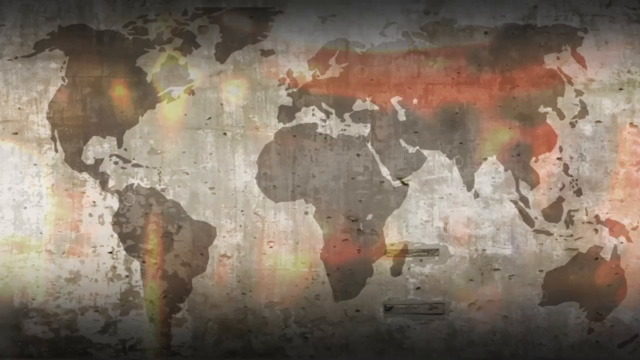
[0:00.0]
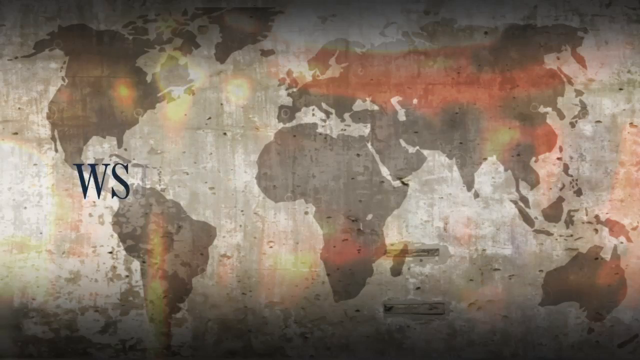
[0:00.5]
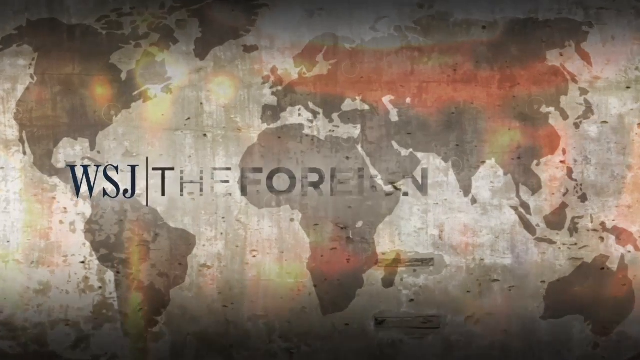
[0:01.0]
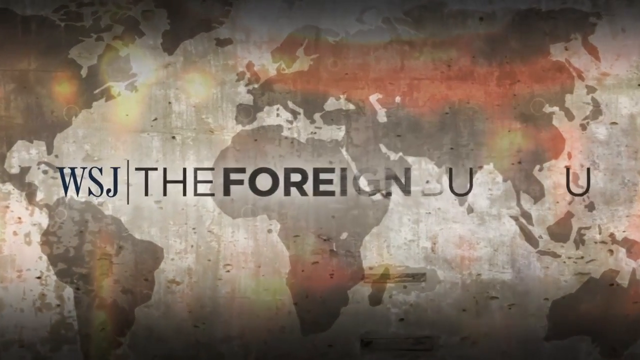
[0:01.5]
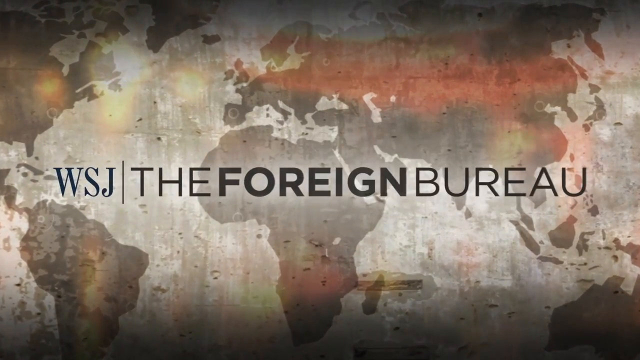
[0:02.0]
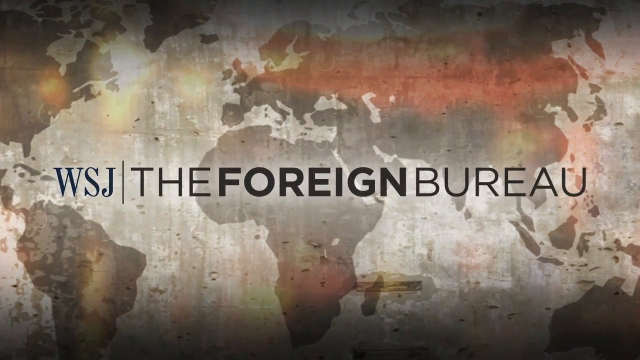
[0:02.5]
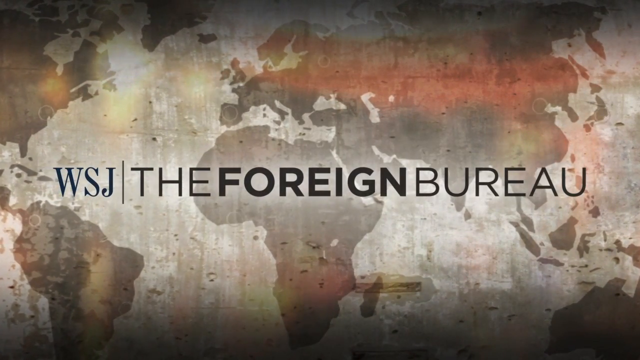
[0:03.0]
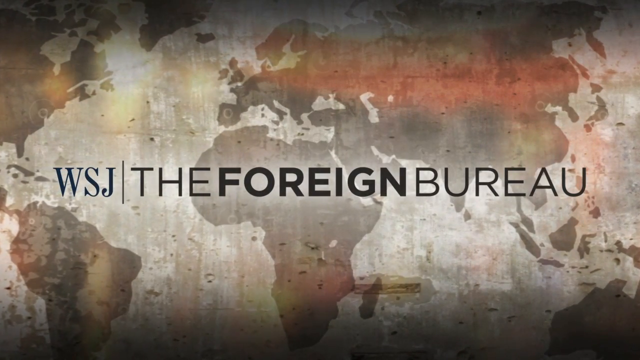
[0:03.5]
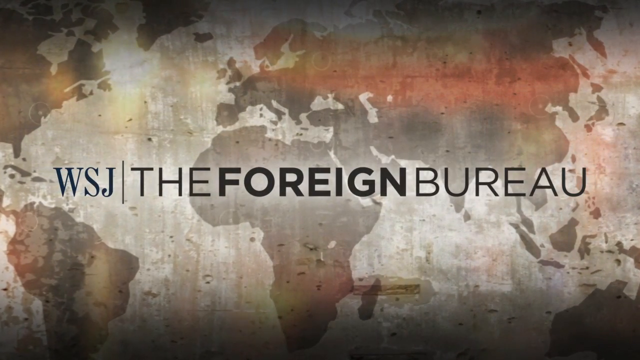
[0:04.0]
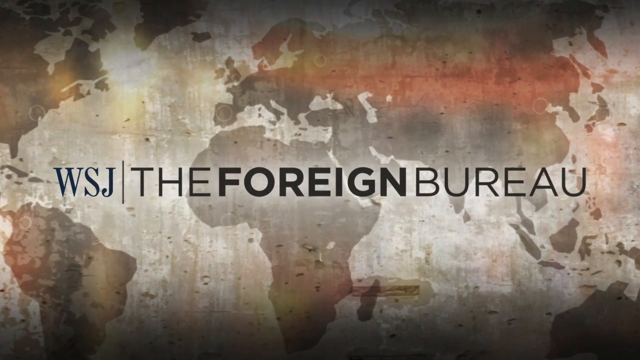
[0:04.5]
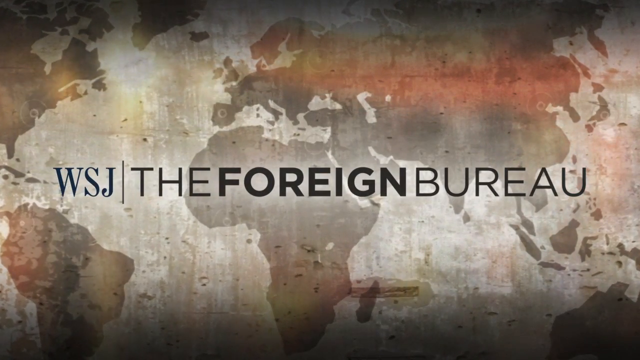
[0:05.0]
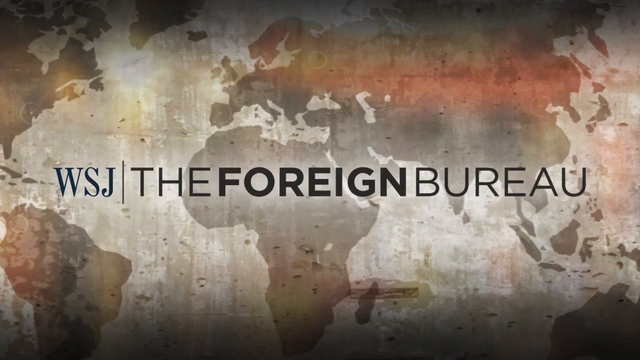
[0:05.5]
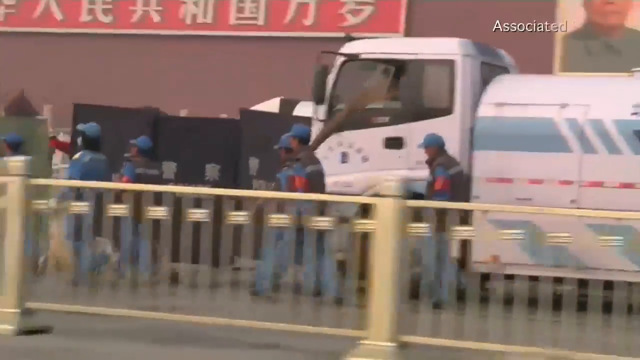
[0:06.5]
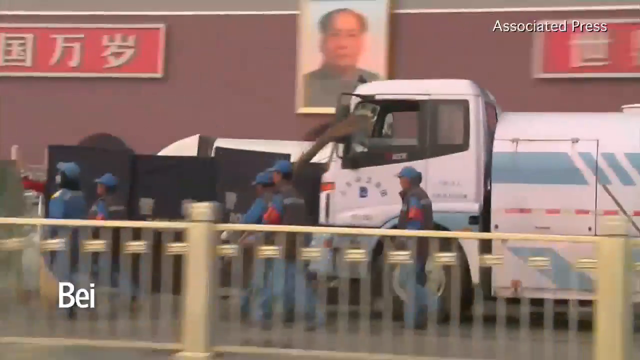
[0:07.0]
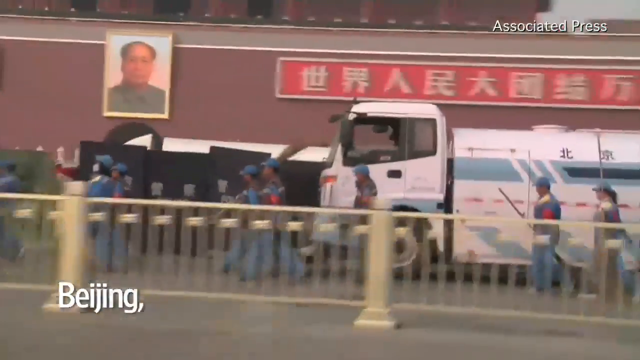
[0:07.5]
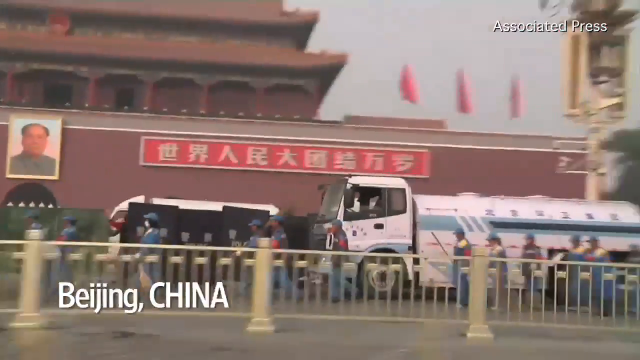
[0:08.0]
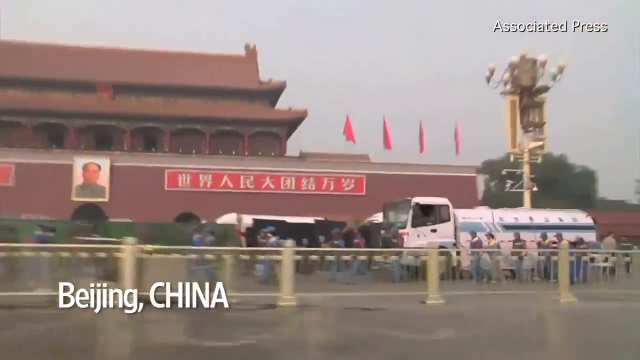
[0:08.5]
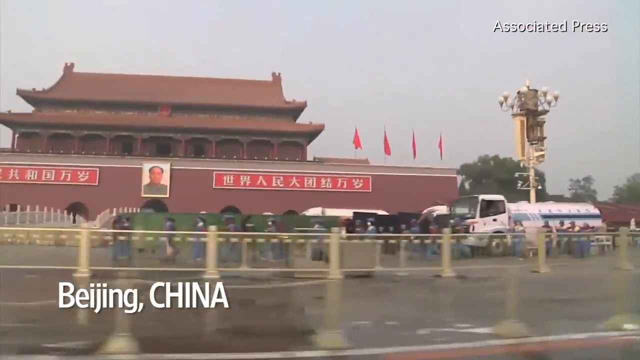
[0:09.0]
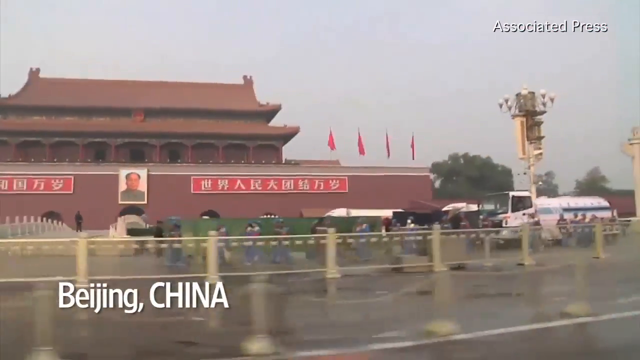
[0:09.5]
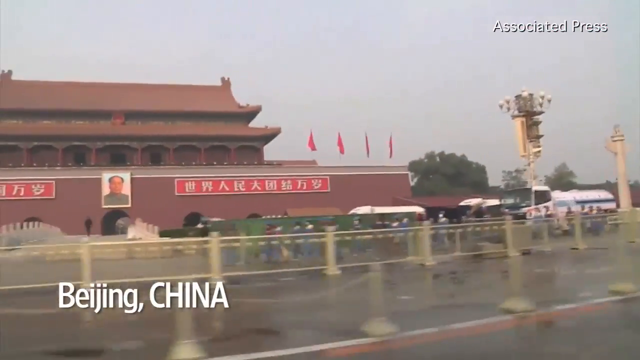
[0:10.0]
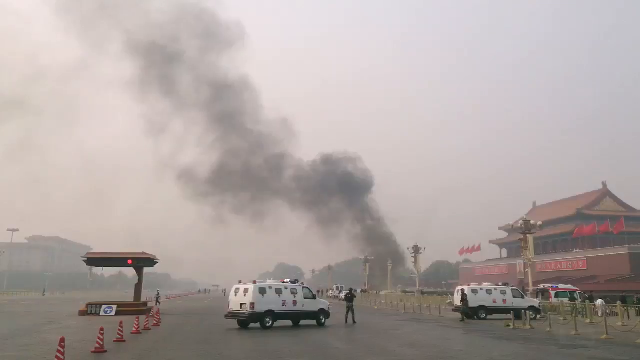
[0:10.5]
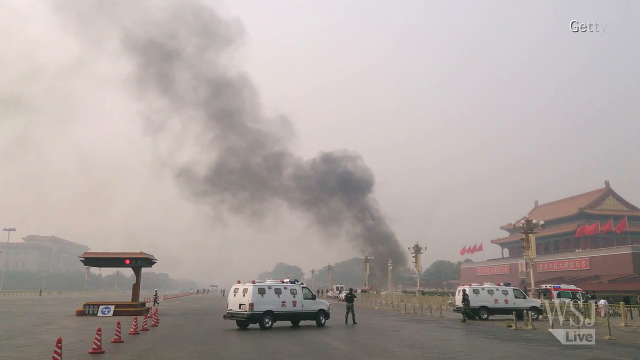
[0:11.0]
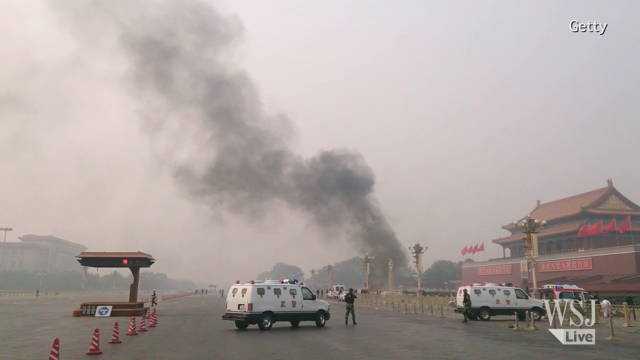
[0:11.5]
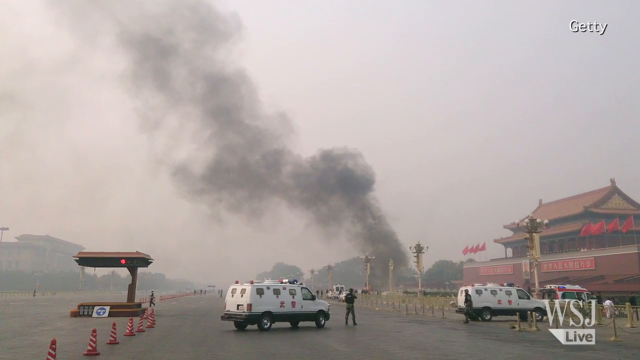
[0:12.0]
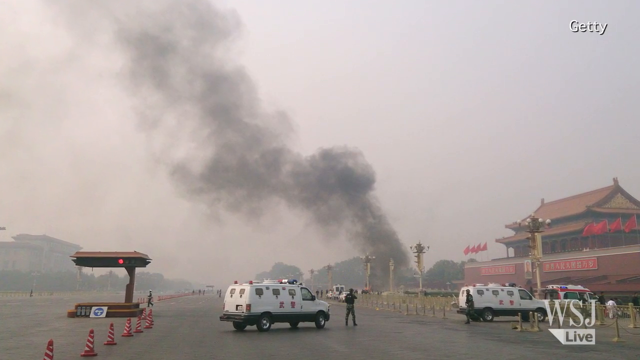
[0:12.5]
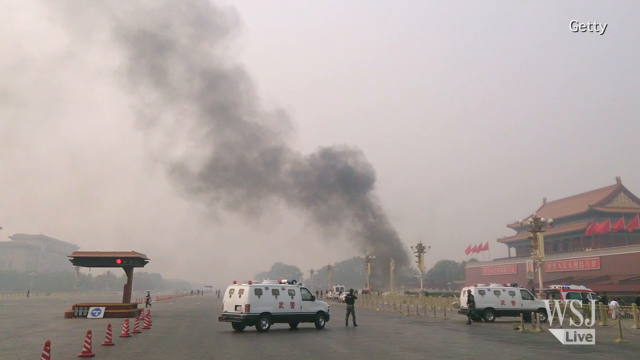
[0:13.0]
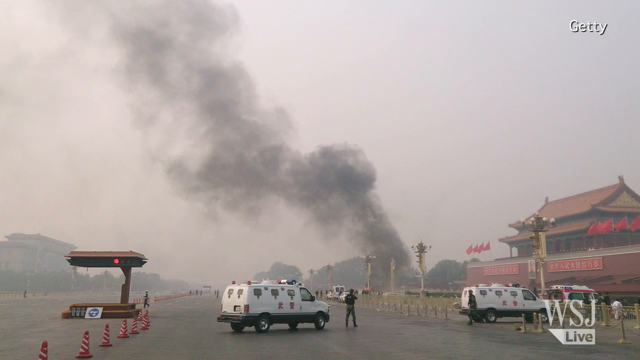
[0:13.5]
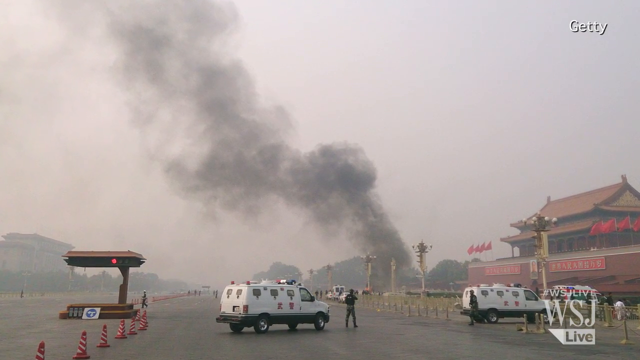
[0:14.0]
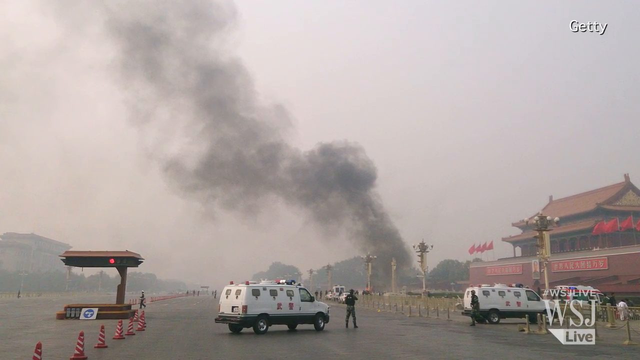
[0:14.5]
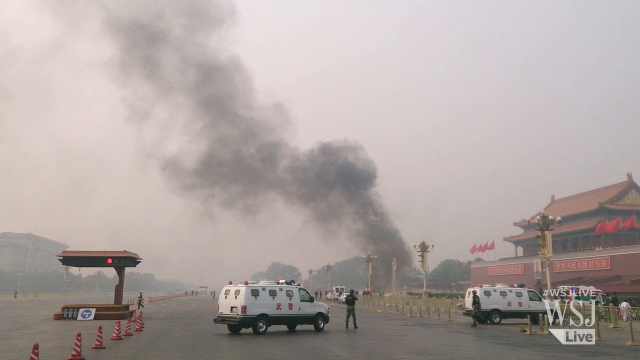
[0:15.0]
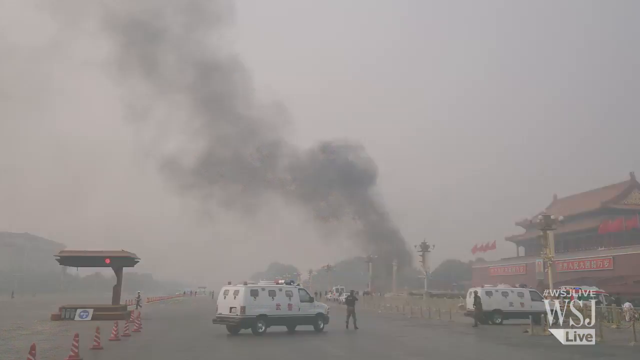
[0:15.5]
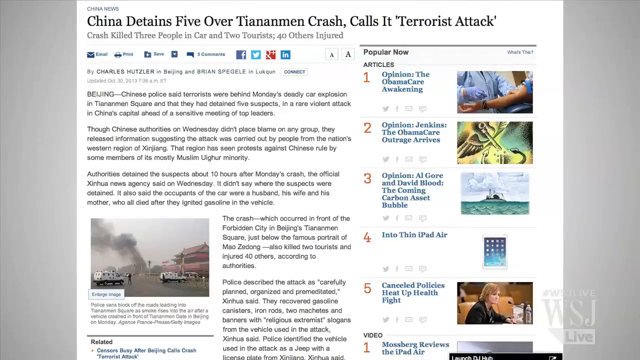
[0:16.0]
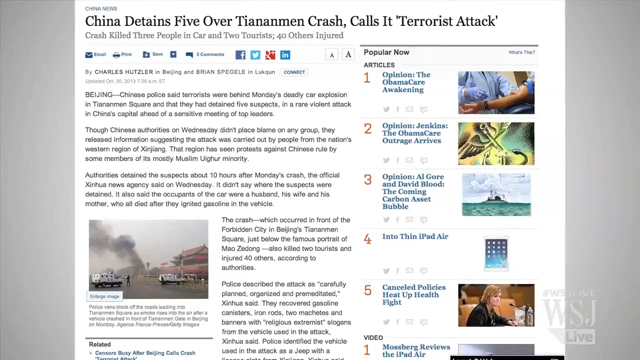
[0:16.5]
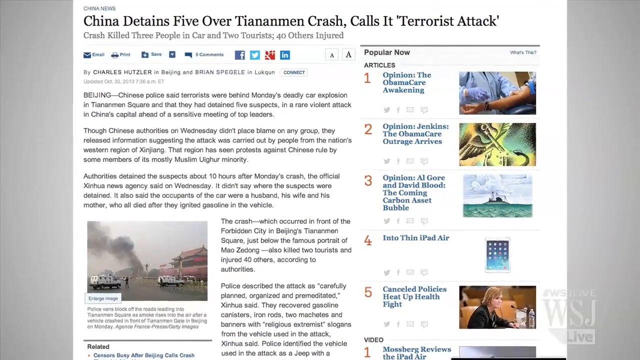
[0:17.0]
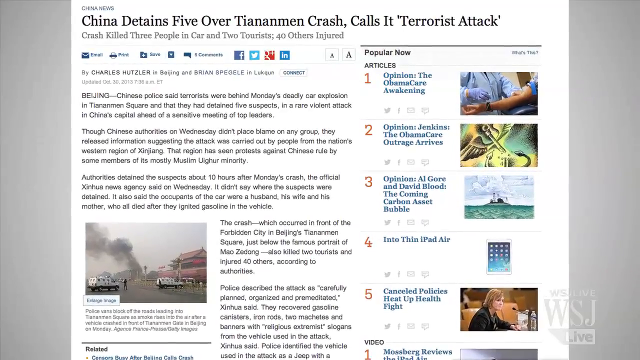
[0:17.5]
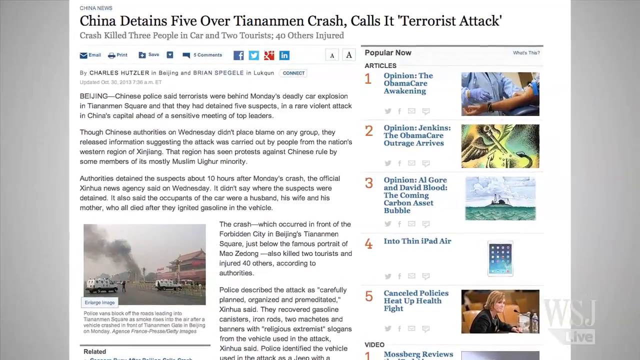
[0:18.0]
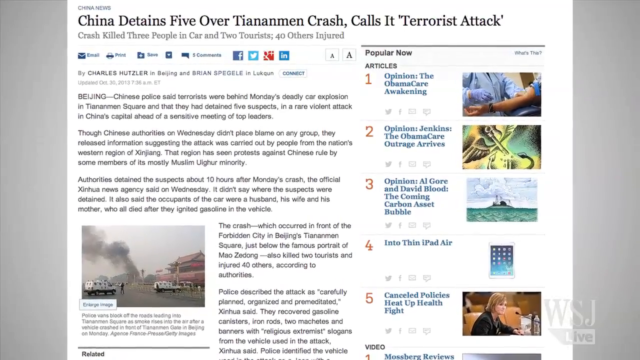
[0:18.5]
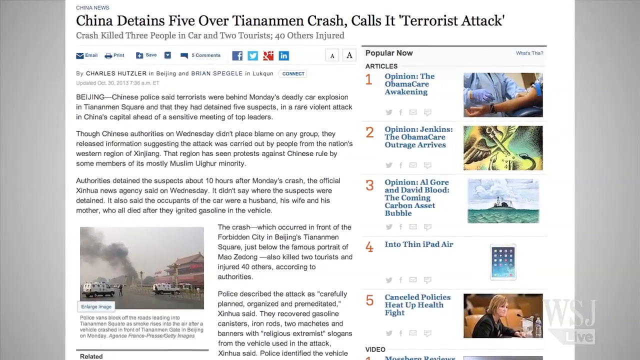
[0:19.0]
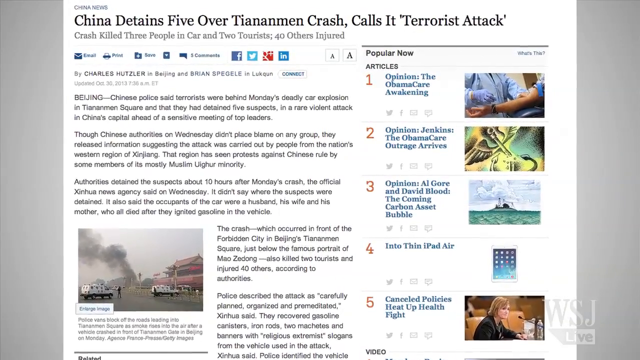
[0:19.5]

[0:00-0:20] The video seems to be from the Wall Street Journal: the Wall Street Journal "WSJ" logo appears, followed by text reading "Foreign Bureau." A gray and red map of what looks like the continents appears, and the view kind of zooms in towards Africa, Europe and Russia. Footage then follows of what looks like Beijing, China, apparently Tiananmen. What looks like a red building is visible, with what looks like an image of the leader outside. The camera quickly pans from right to left as cars drive by. A still image shows what looks like gray smoke in the background, rising from the center right up to the left into the sky; the image seems to be from Getty. What look like news vans are in the foreground. The image is zoomed in on, and then it cuts to a web article headlined "China detains 5 over Tiananmen crash, calls it terrorist attack." The view zooms in on the article; beneath the headline it reads "crash killed 3 people in a car and 2 tourists and 40 others injured."